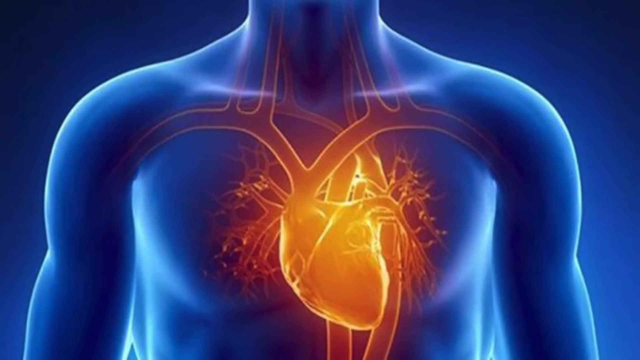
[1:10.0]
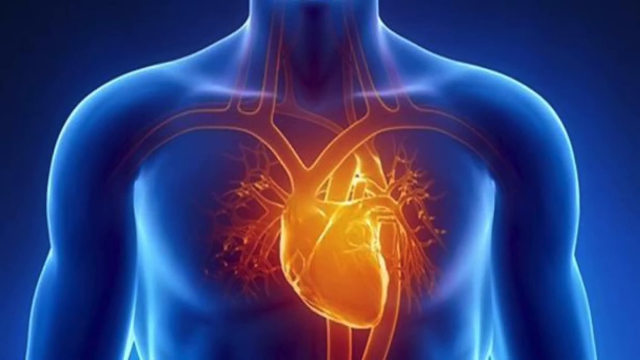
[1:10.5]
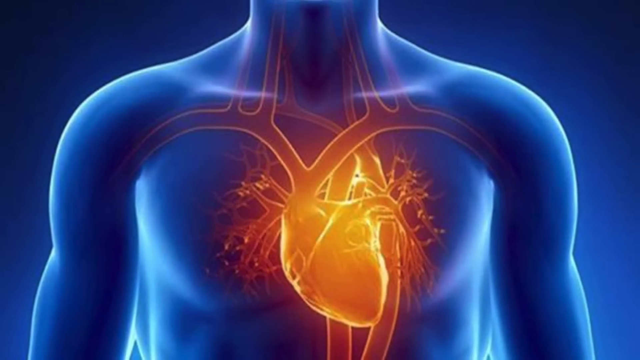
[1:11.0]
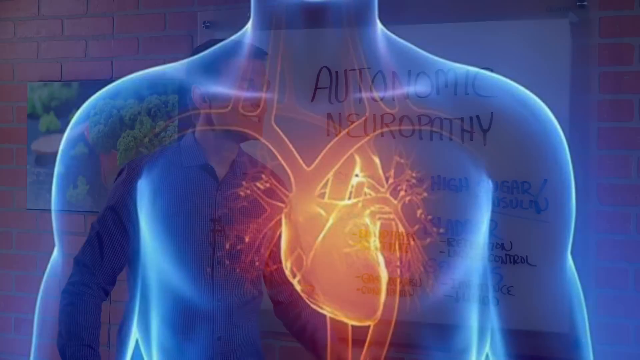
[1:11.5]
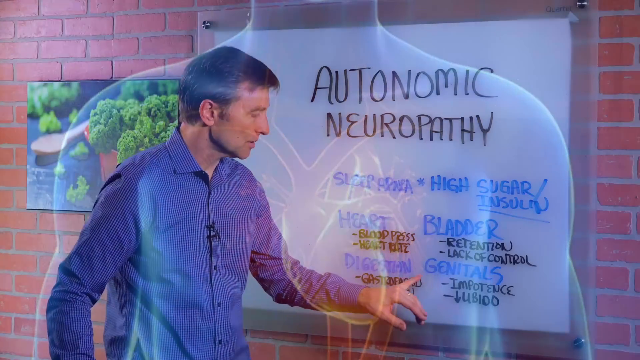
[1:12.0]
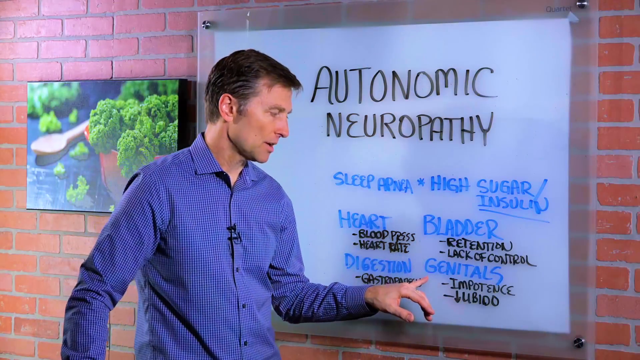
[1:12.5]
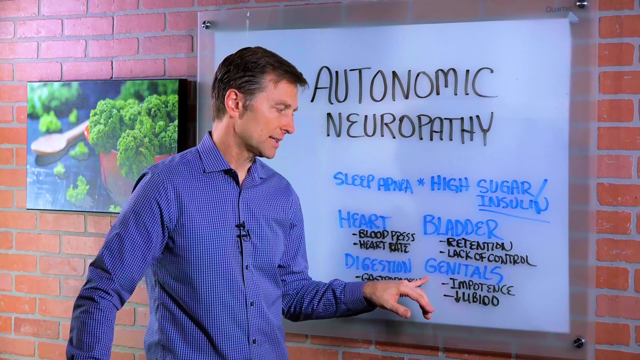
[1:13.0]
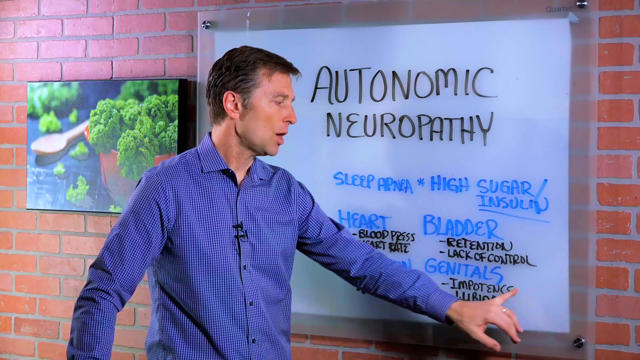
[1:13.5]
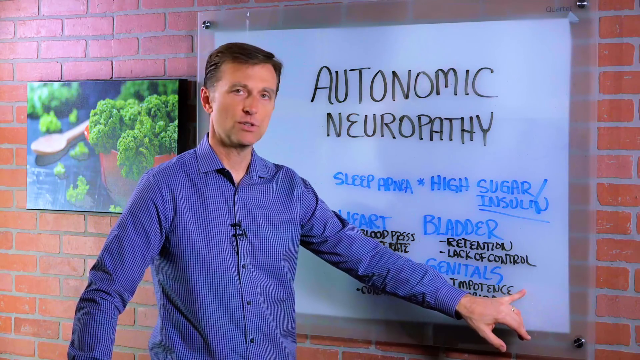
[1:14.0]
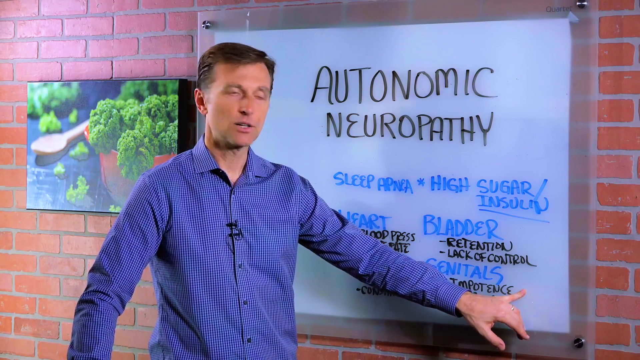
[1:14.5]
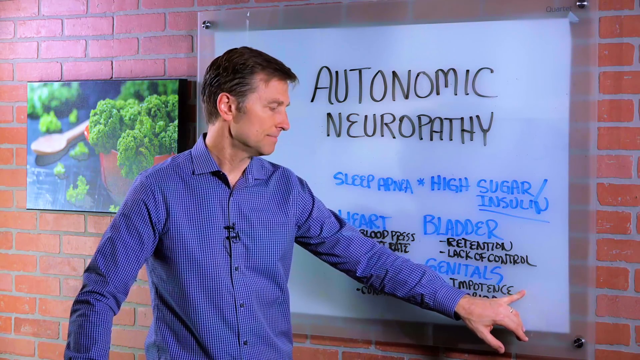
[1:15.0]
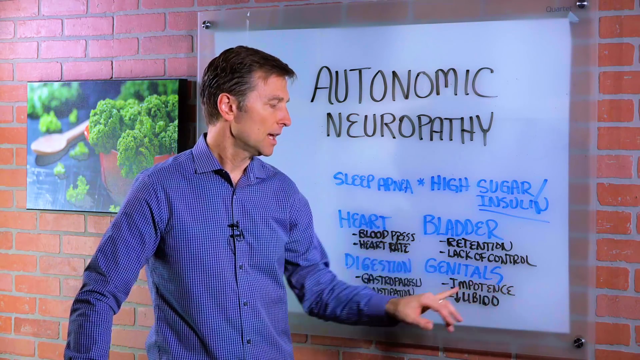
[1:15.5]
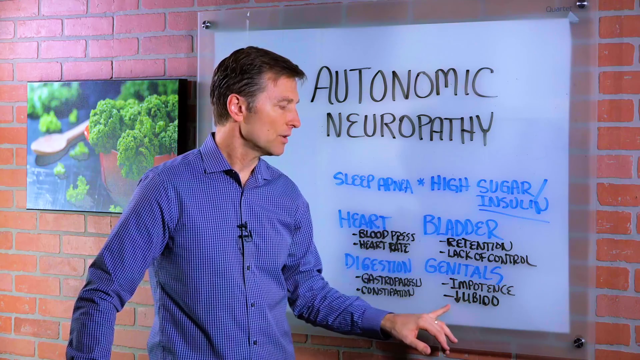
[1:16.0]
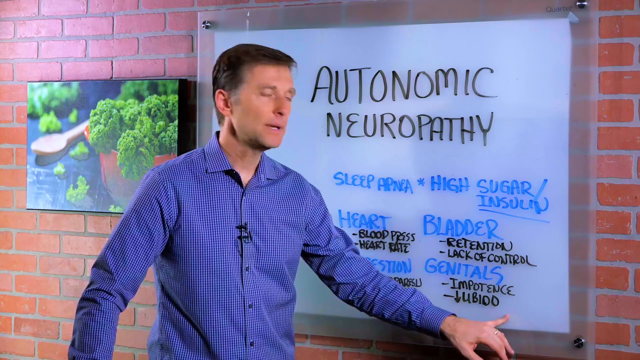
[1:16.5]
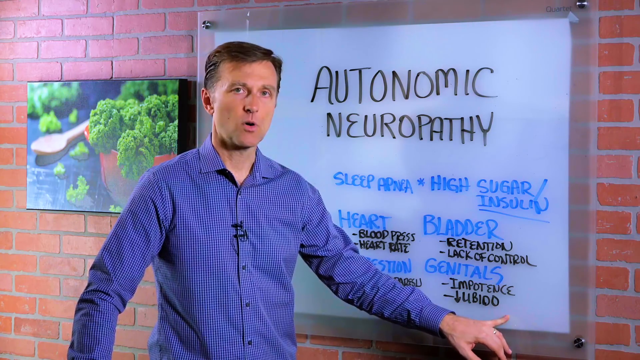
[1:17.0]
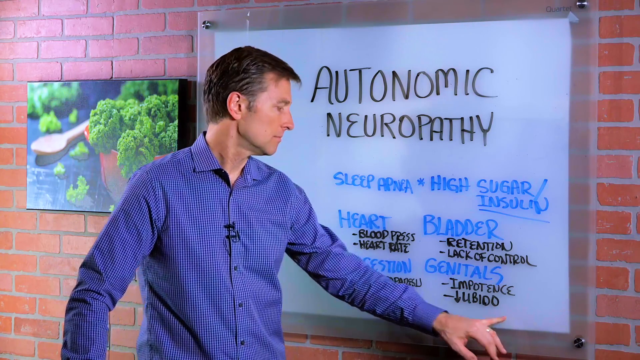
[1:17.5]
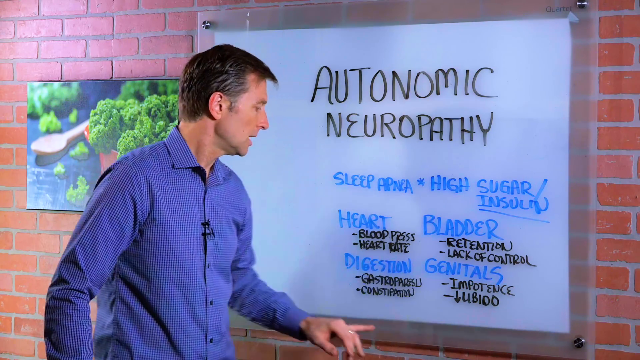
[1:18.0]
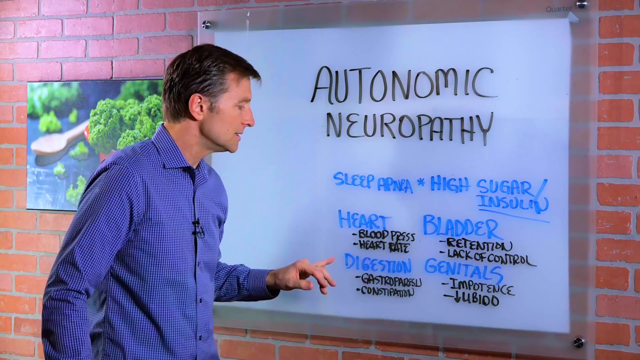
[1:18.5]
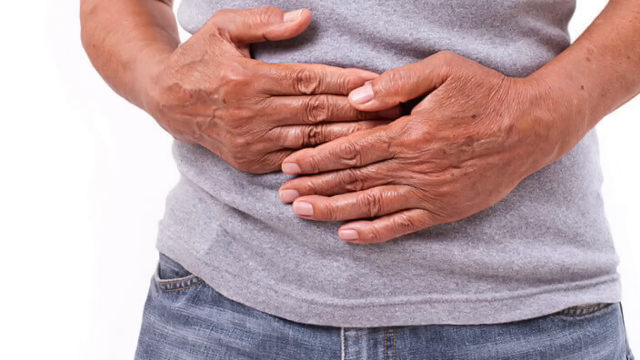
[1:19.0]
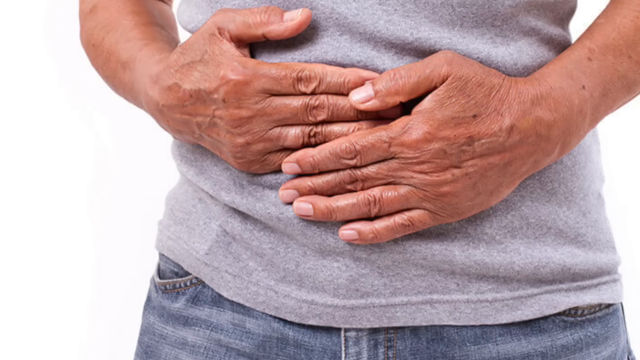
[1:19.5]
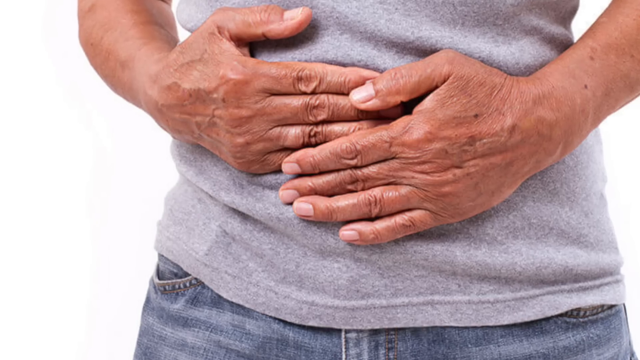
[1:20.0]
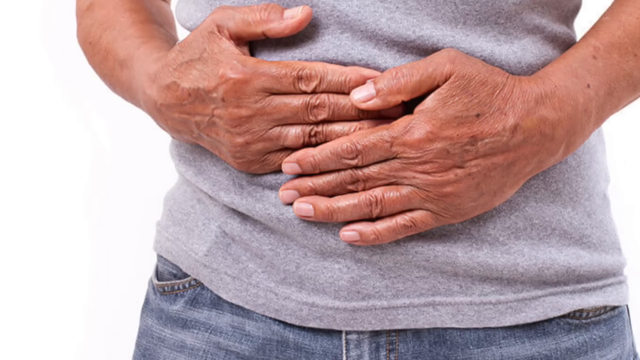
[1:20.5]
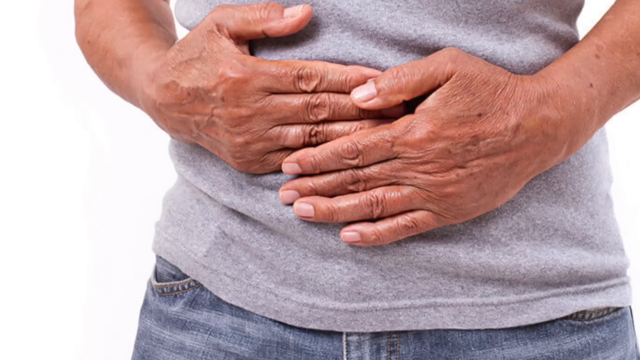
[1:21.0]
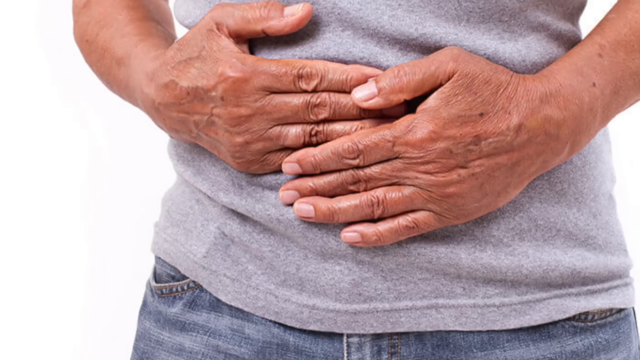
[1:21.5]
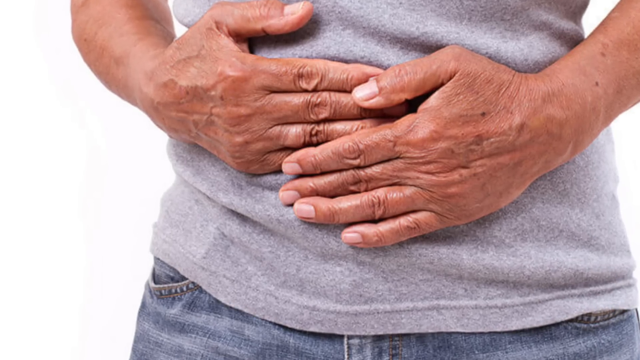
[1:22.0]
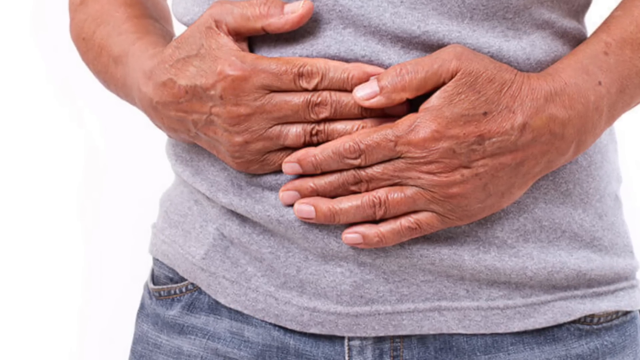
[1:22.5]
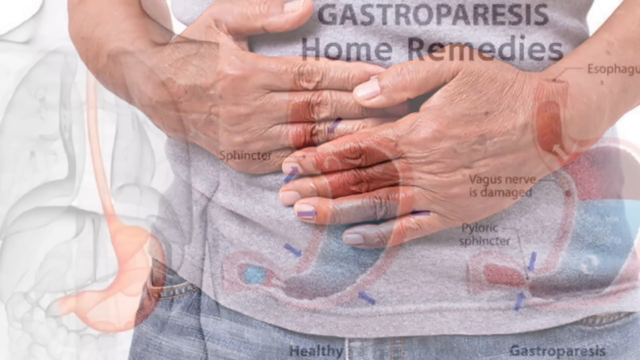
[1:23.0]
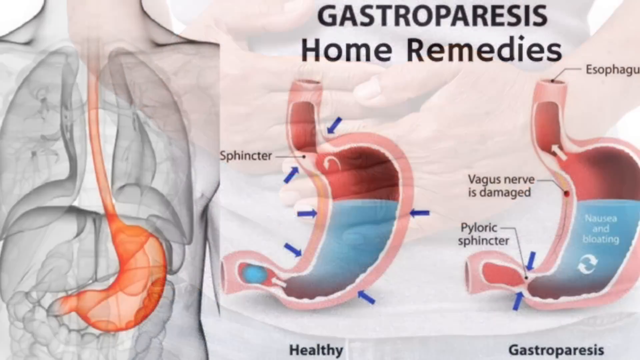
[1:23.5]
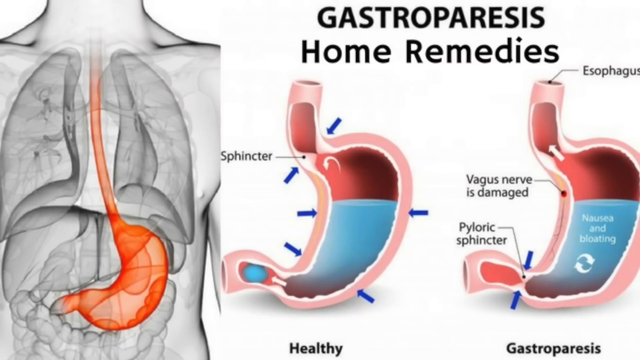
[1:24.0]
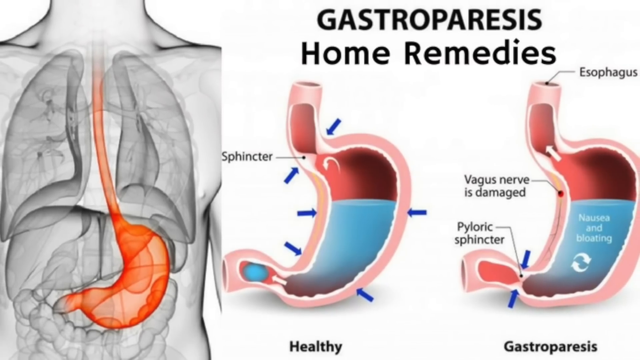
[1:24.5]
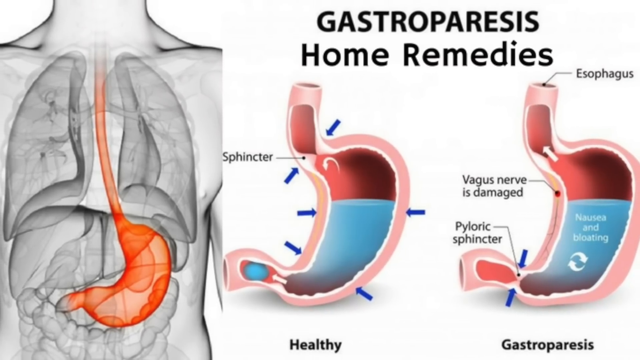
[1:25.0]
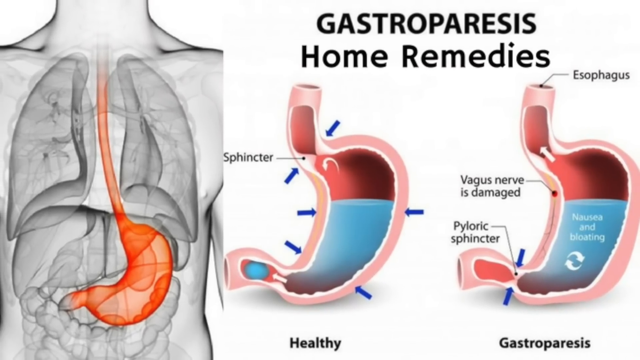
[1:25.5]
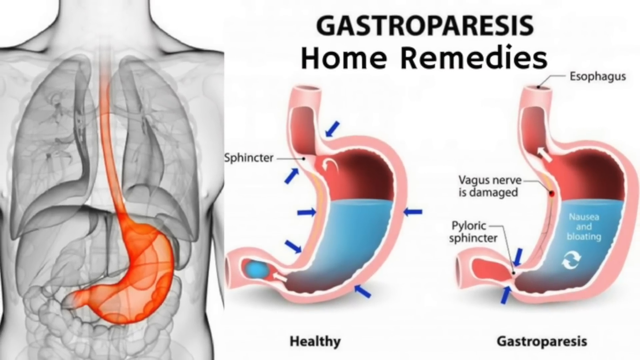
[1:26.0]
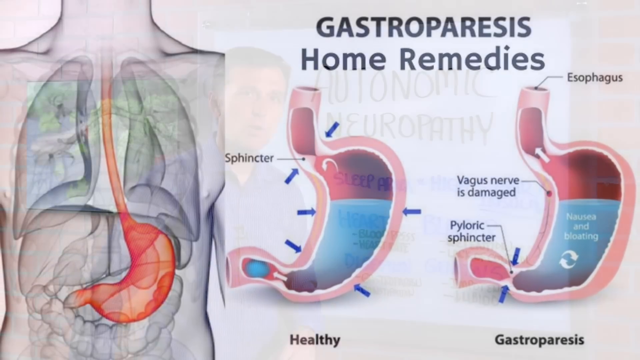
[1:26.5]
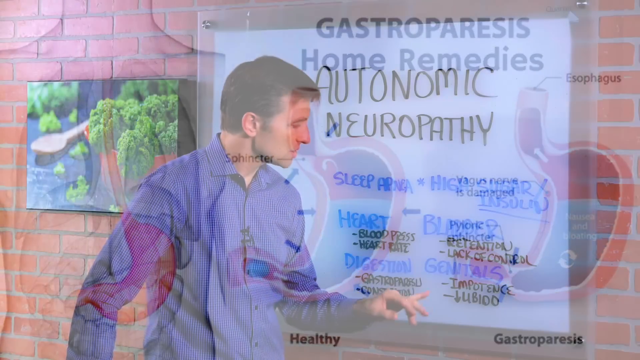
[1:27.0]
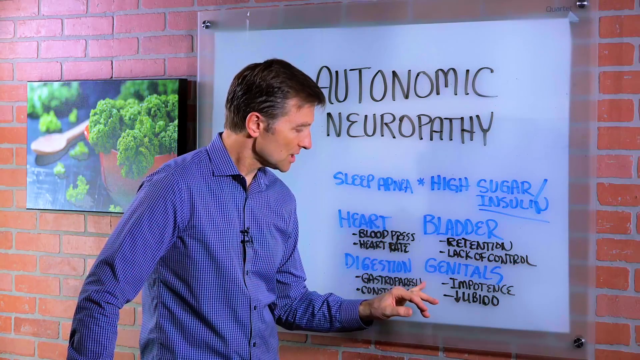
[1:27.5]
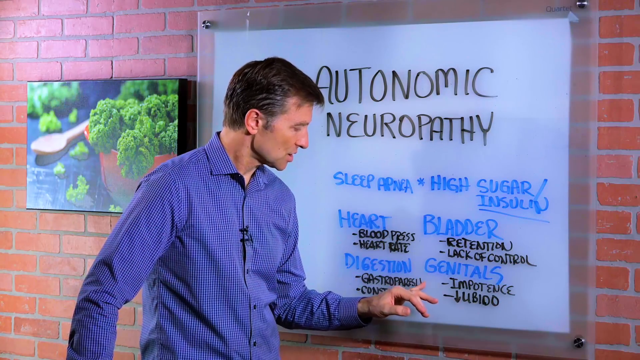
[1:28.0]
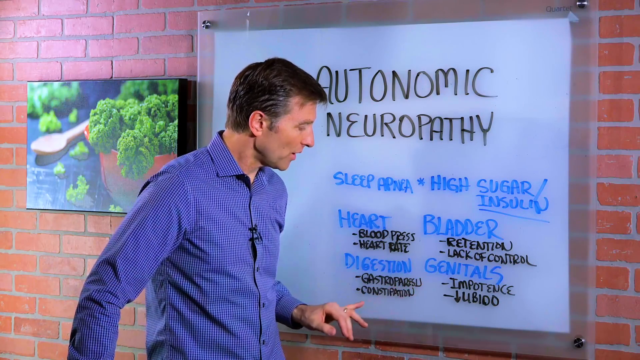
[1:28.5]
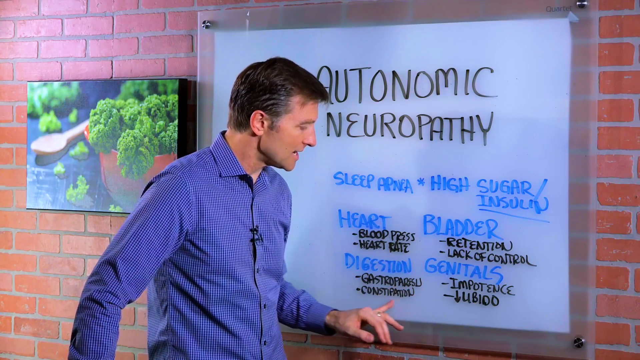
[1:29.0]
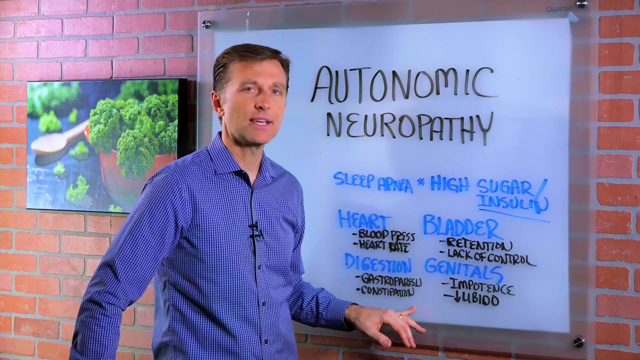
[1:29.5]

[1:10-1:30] An image shows the upper torso and the lower portion of the neck closest to the body, without a face. It depicts the blood vessels, the veins and the heart of the circulatory system, with the veins attached to the heart. The veins are pictured in red and the heart in orange. The veins make an M formation from the inner shoulder on the left side to the sternum area of the chest, and another M formation over the underarm on the right side. At least six veins are moving up from the neck, three on the left side and three on the right side. The video then returns to Dr. Mandel, who is still speaking to his audience.